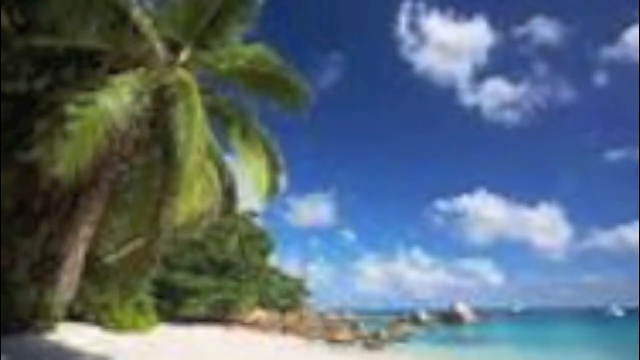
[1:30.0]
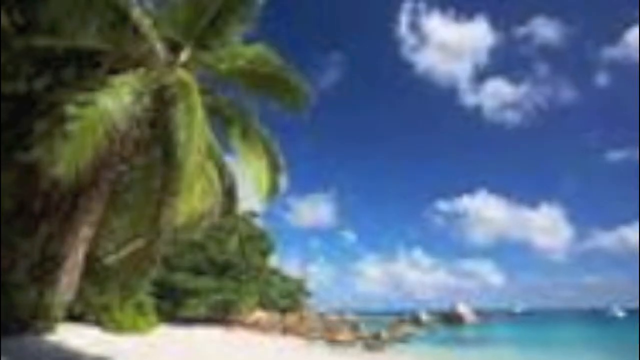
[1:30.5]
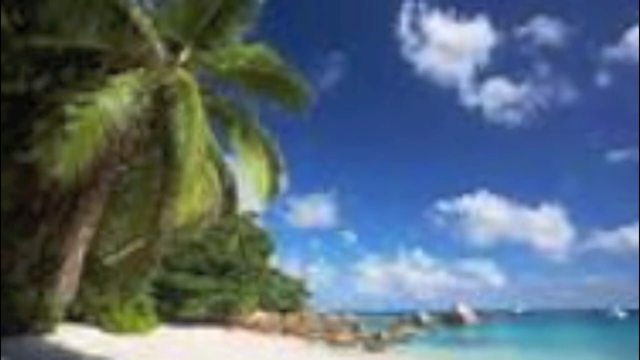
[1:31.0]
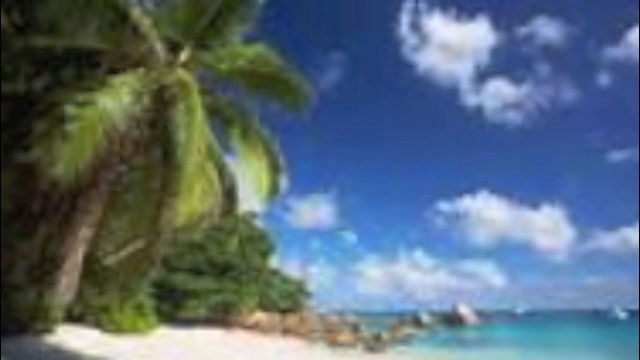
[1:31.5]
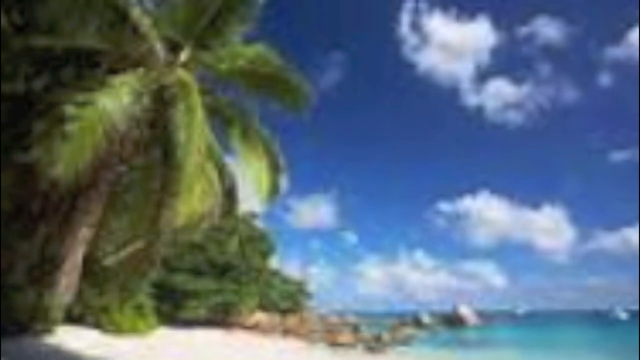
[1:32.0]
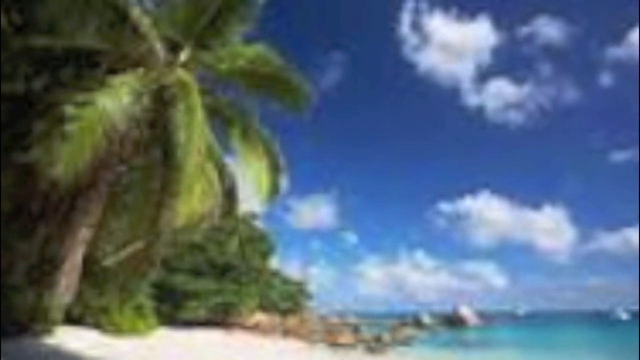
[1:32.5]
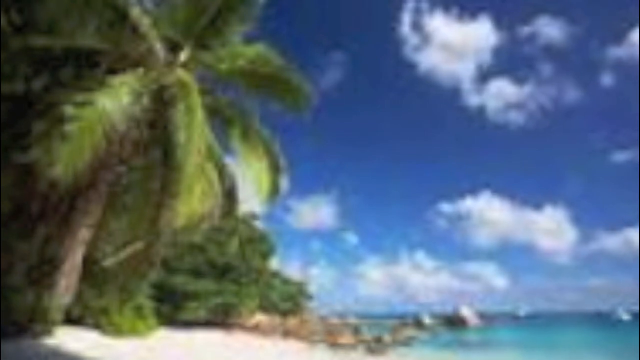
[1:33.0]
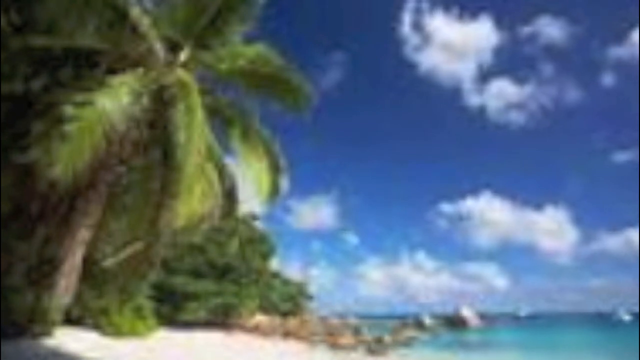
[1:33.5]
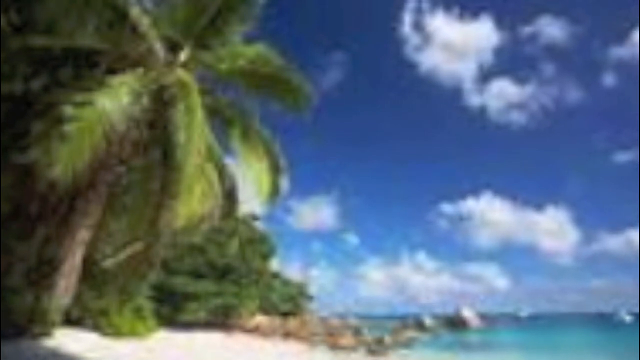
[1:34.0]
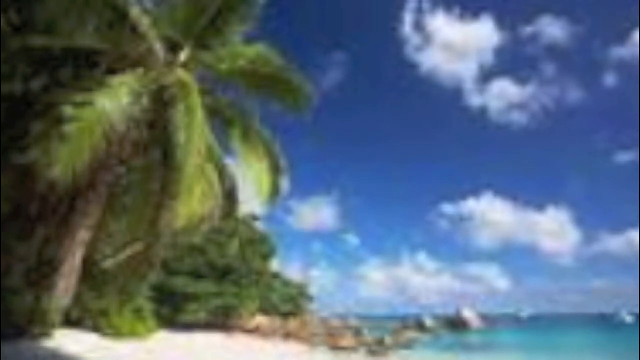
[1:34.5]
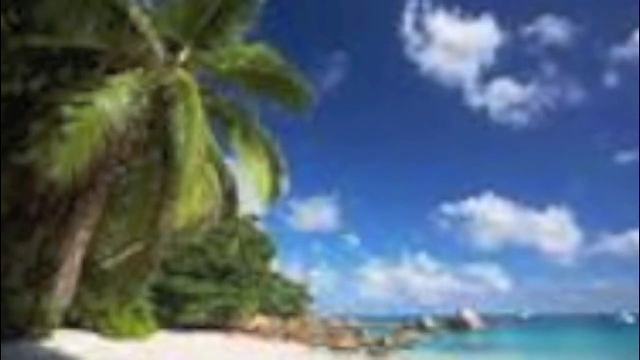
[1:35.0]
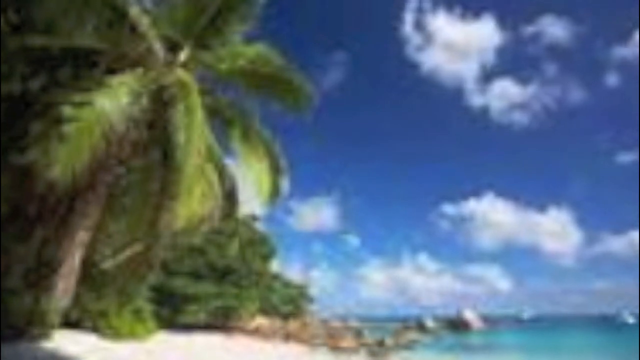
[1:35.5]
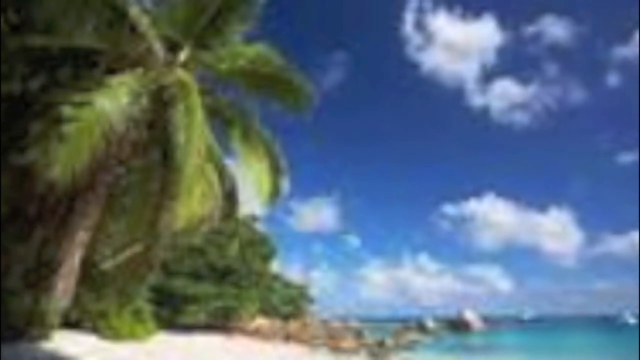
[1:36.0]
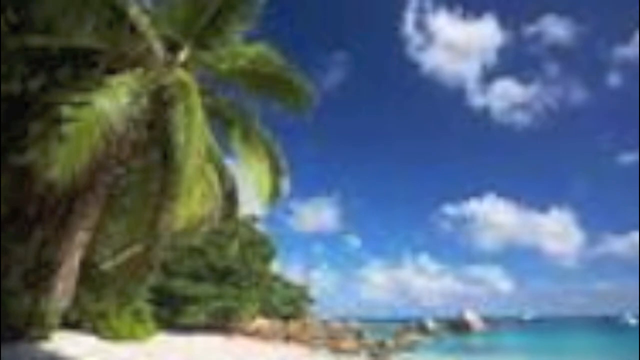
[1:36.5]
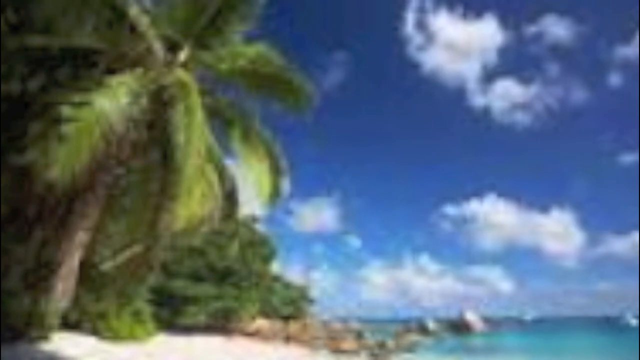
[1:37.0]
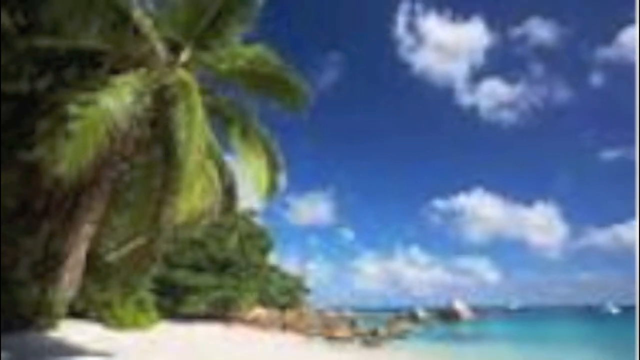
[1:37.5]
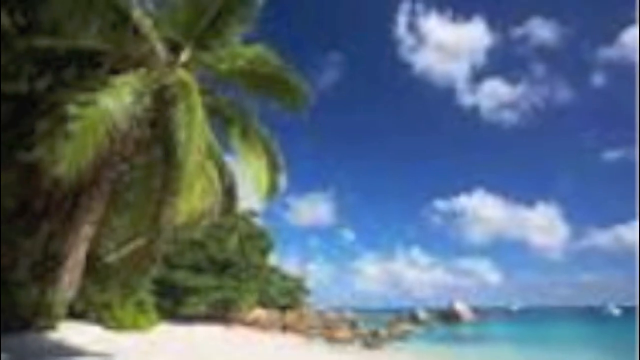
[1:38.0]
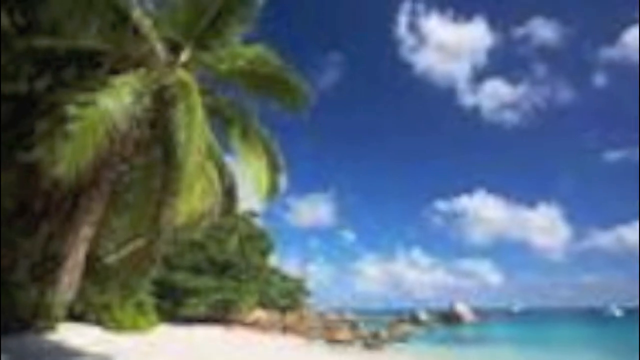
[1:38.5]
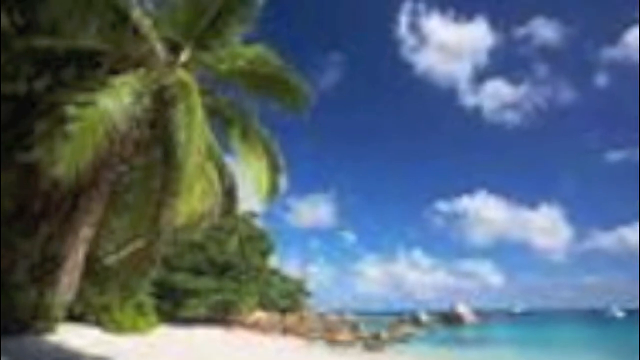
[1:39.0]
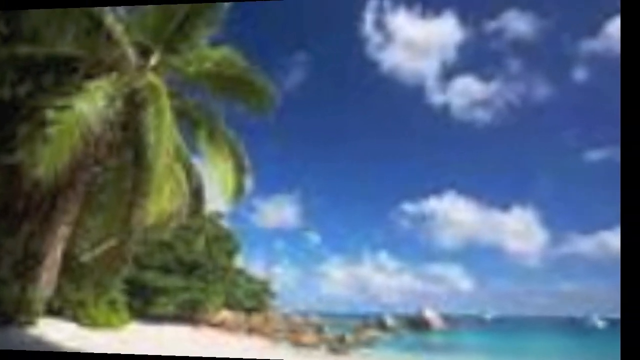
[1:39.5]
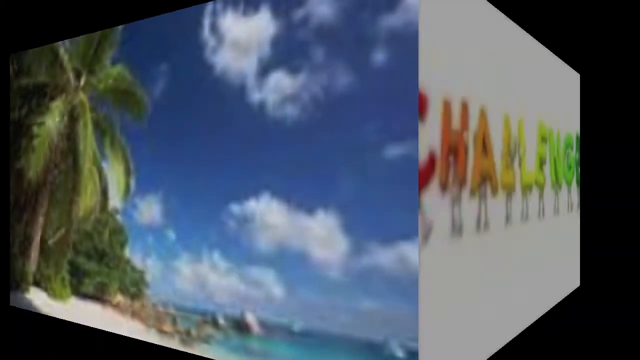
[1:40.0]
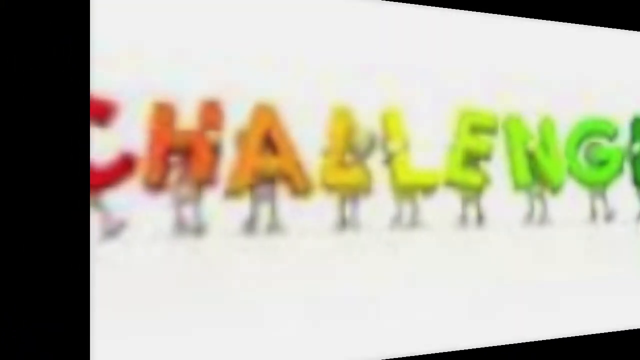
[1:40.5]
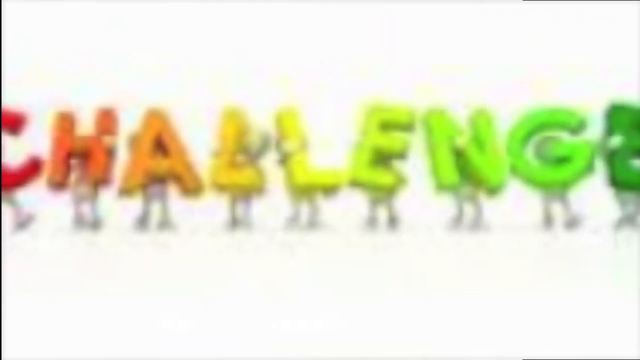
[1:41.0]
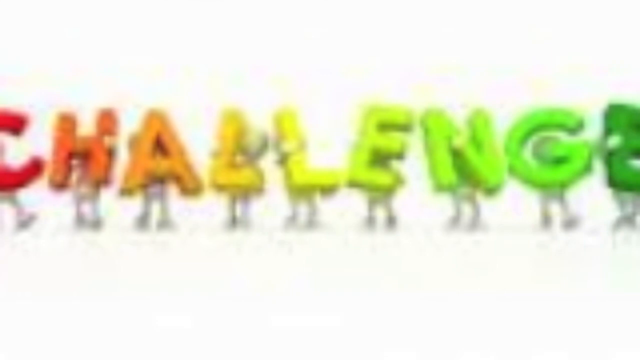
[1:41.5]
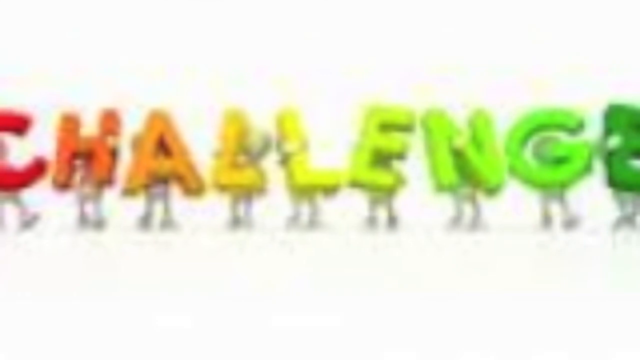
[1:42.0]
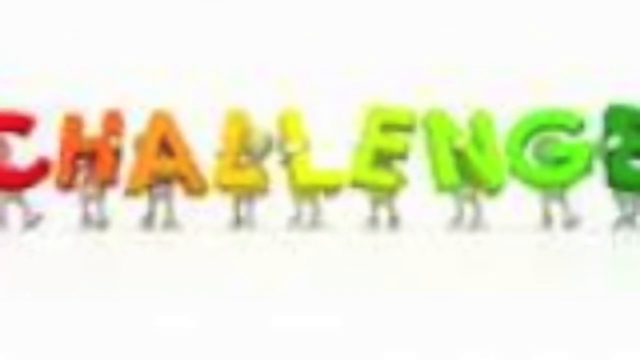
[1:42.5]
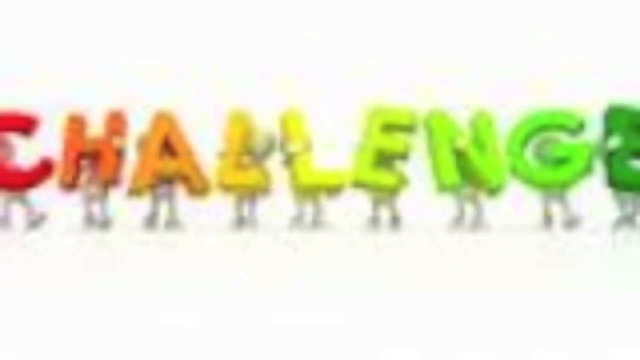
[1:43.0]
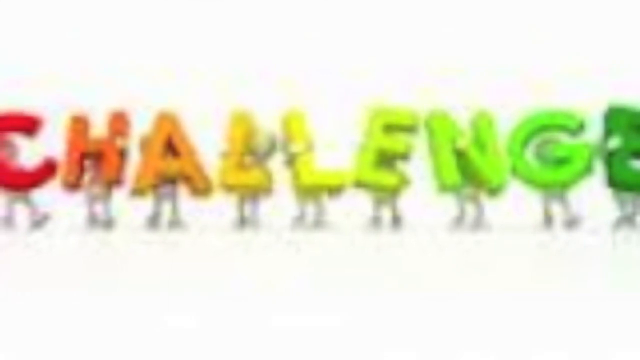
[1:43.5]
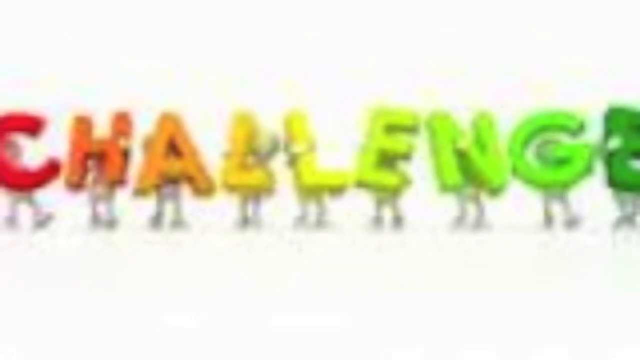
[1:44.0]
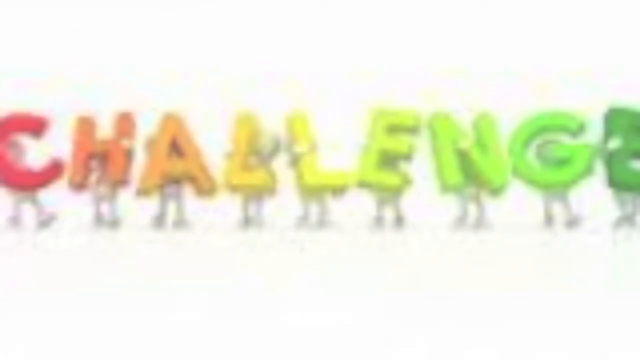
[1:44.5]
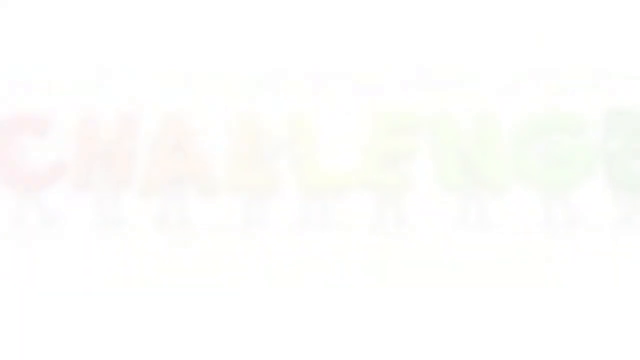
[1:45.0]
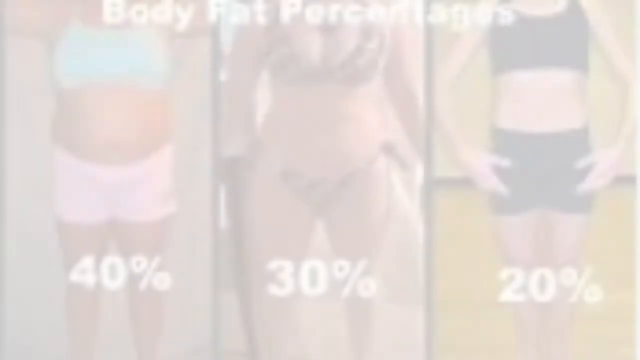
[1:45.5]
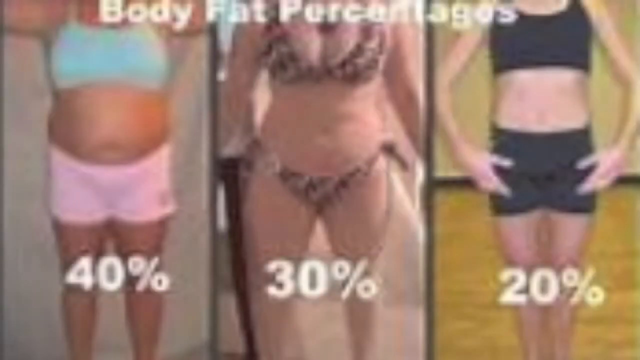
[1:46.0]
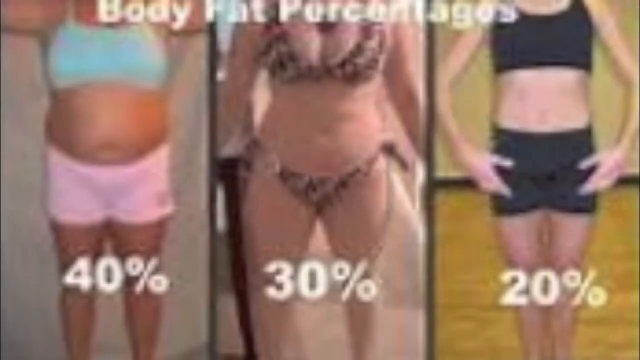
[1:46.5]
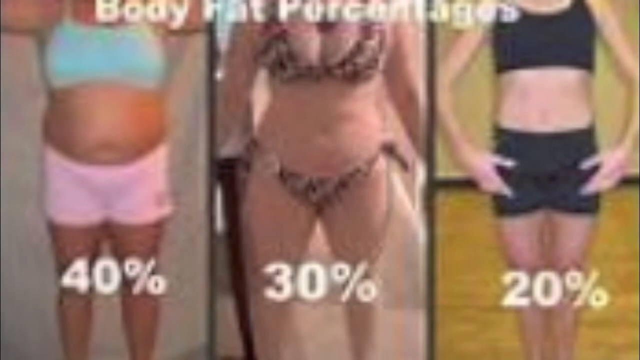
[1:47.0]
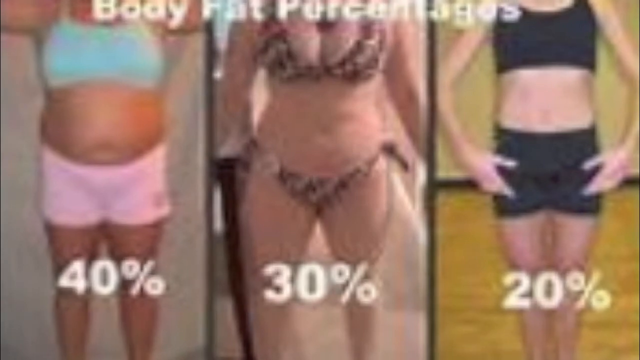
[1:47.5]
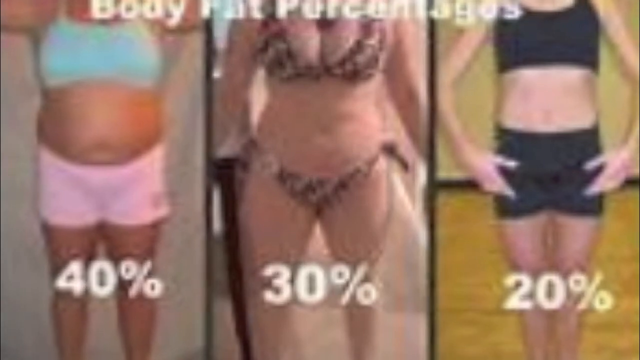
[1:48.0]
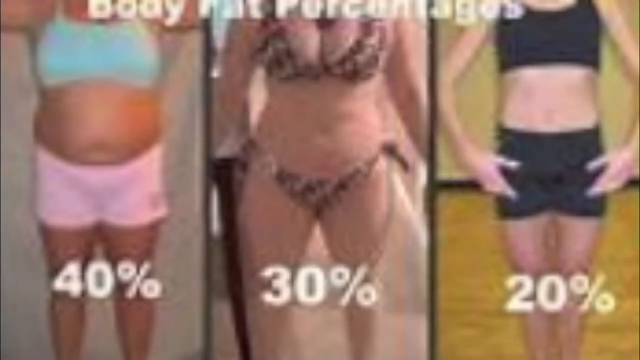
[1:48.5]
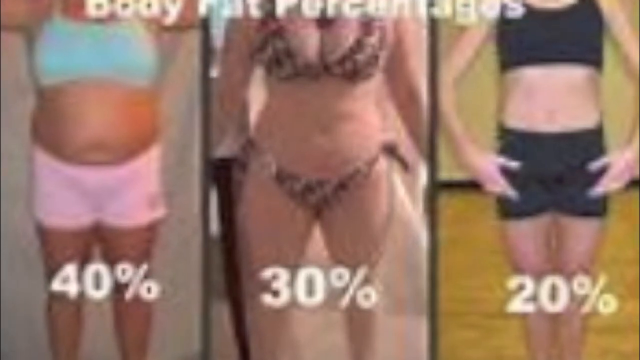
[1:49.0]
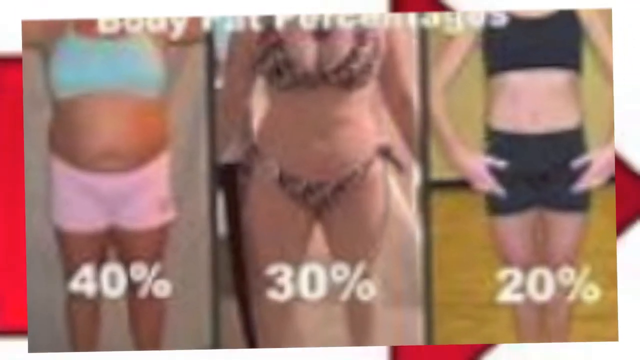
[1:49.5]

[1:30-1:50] The low-resolution, pixelated photo of a tropical beach shows a palm tree on the left and a blue sky with white, fluffy clouds, and the view zooms in and out on it a little. A cube transition, where a cube seems to turn, brings up a new image: the word "challenge," in which each letter looks like a little person. The word is rainbow-colored, with the C red, the H reddish-orange and the A orange, forming a red-to-orange-to-yellow-to-green gradient from left to right across the whole word. It is a still image, not animated. Next comes an image of three bodies with "body fat percentages" at the top of the screen: on the left is a photo of a woman whose body fat is 40%, in the middle 30%, and on the right 20%.